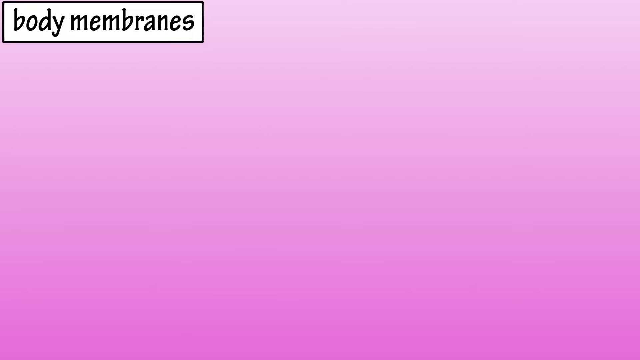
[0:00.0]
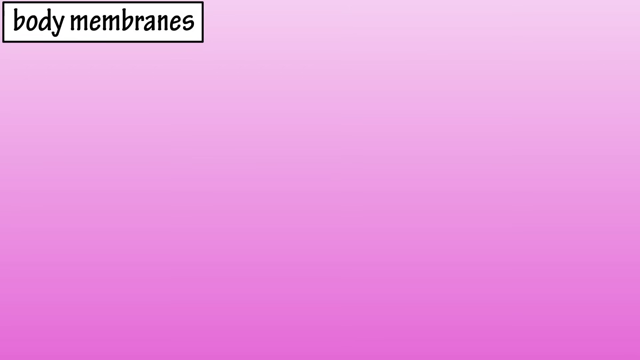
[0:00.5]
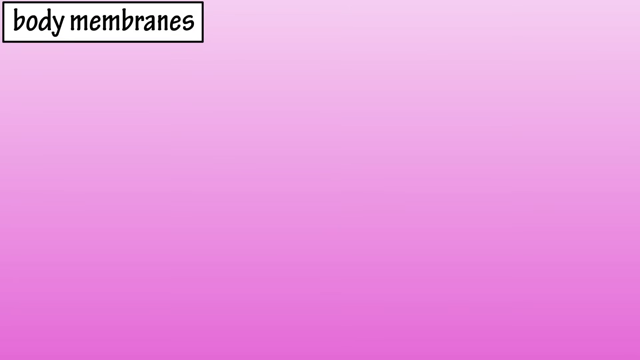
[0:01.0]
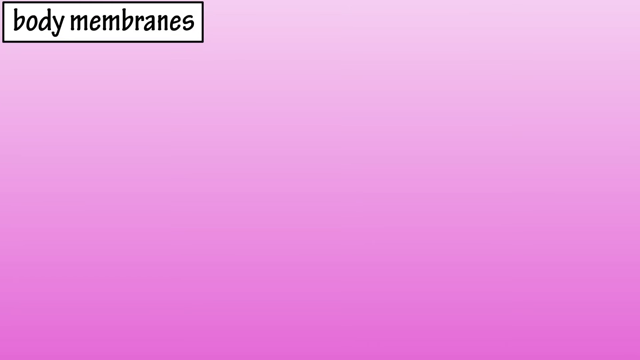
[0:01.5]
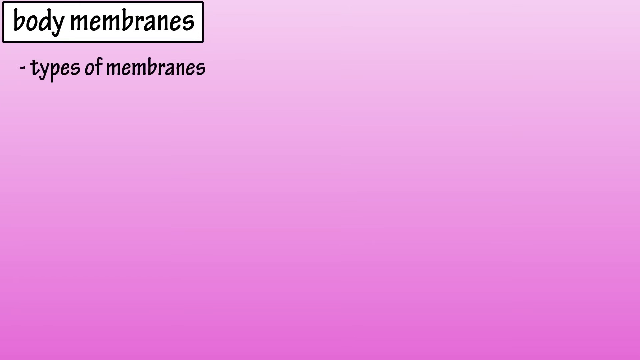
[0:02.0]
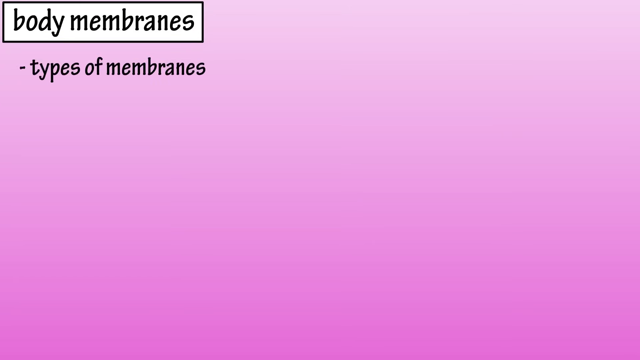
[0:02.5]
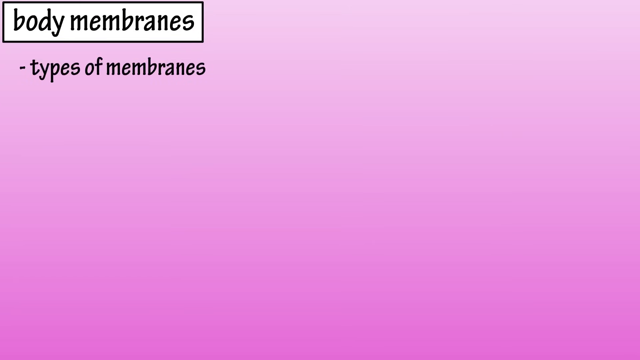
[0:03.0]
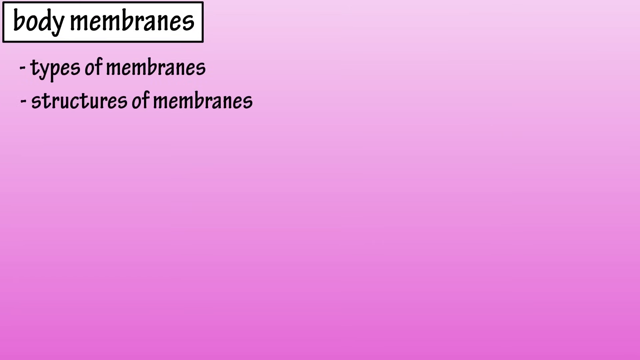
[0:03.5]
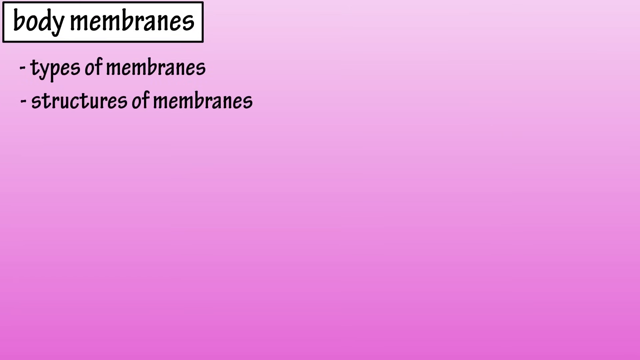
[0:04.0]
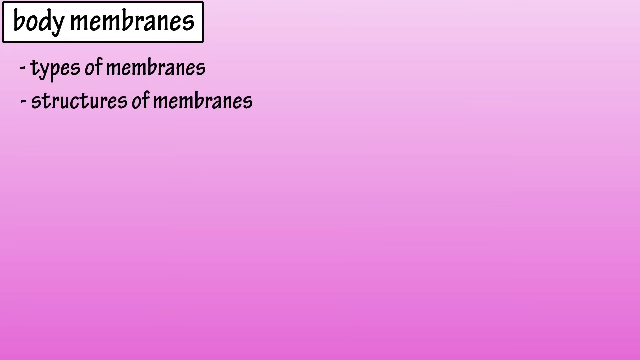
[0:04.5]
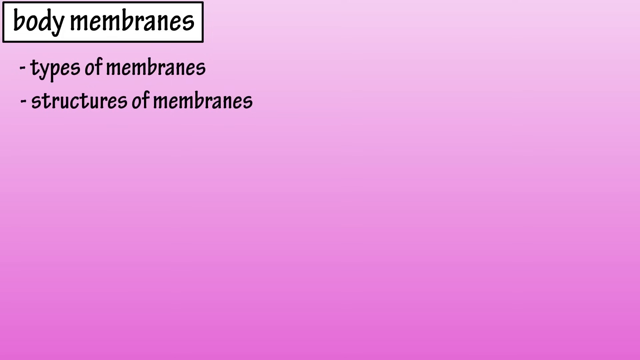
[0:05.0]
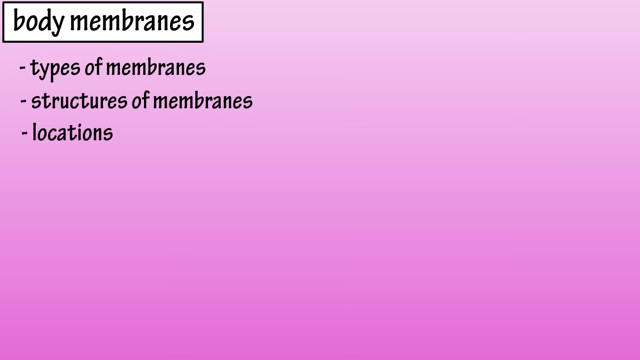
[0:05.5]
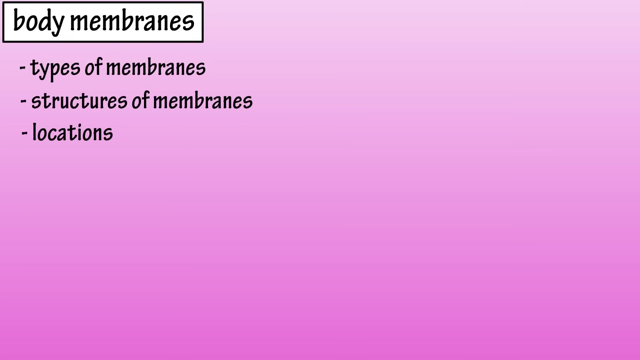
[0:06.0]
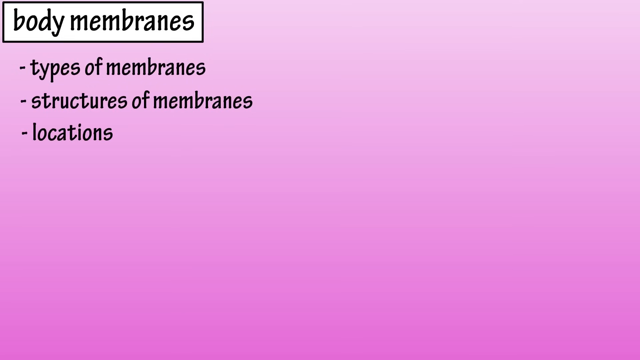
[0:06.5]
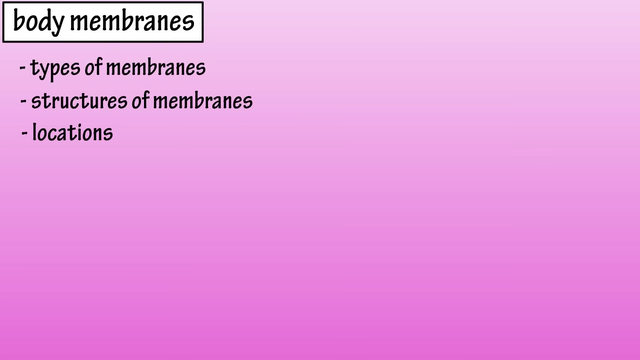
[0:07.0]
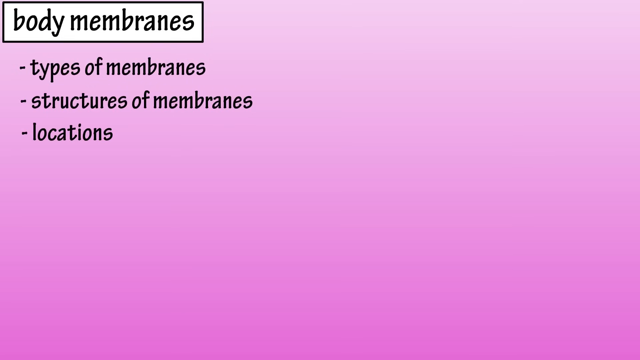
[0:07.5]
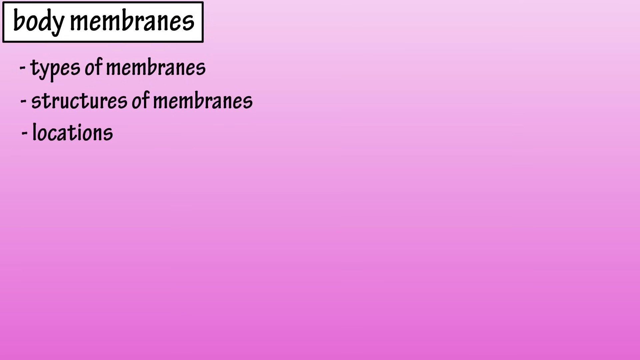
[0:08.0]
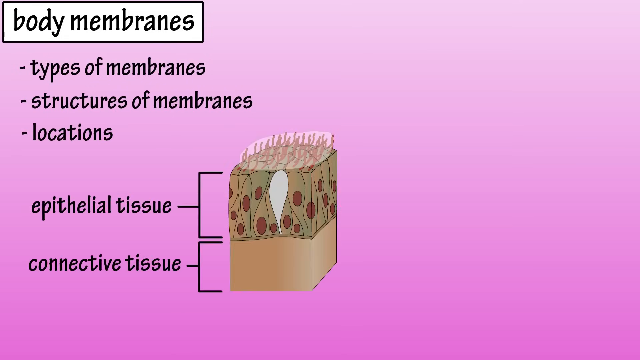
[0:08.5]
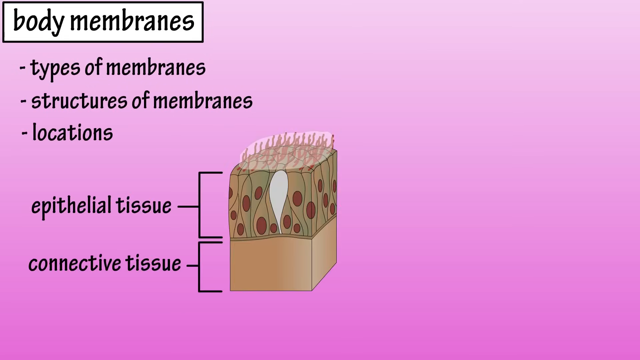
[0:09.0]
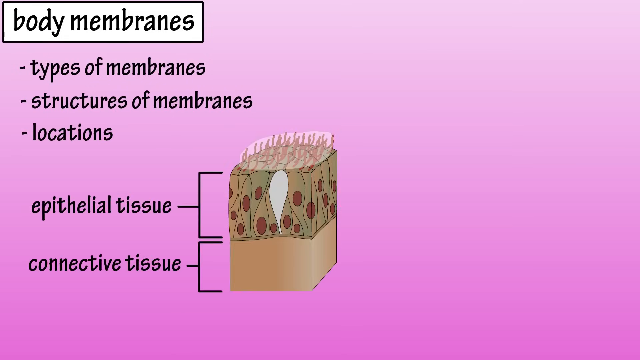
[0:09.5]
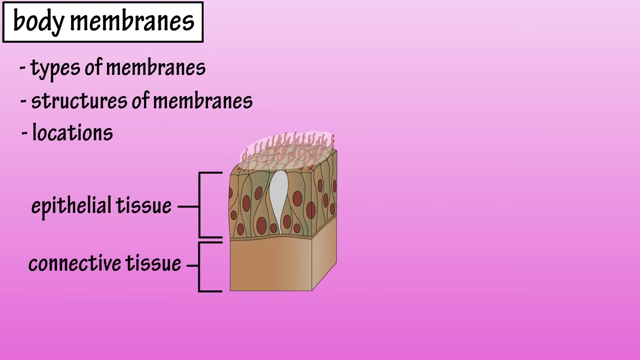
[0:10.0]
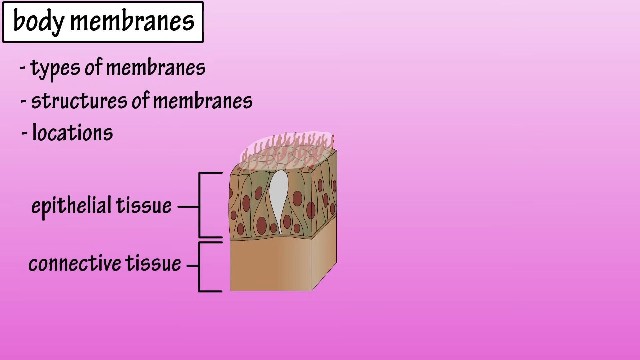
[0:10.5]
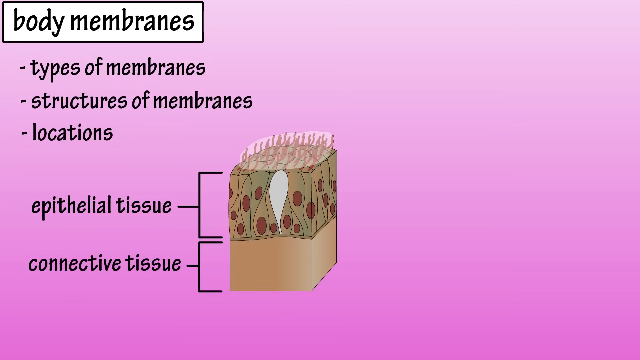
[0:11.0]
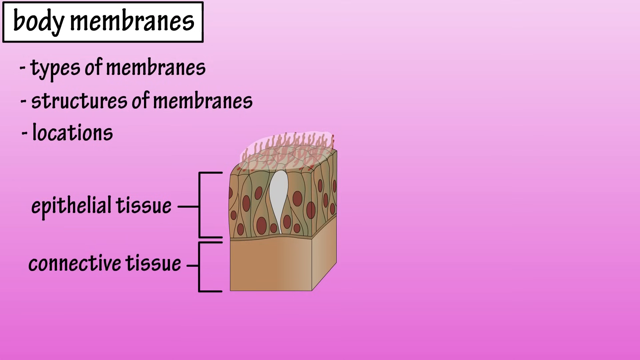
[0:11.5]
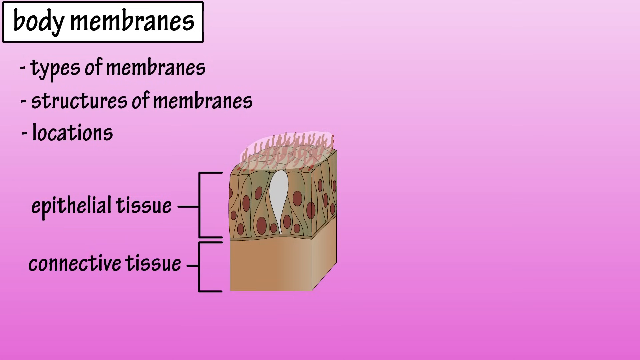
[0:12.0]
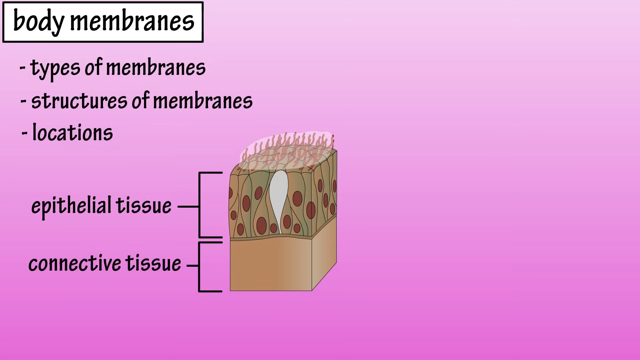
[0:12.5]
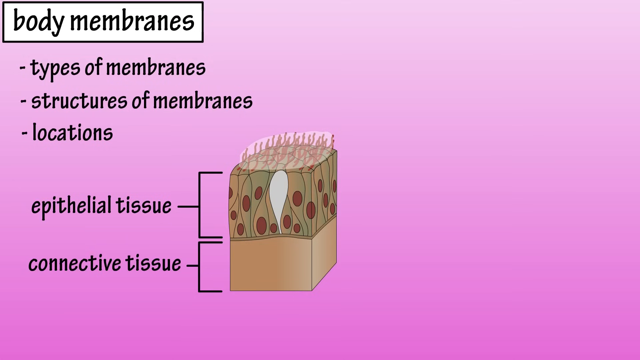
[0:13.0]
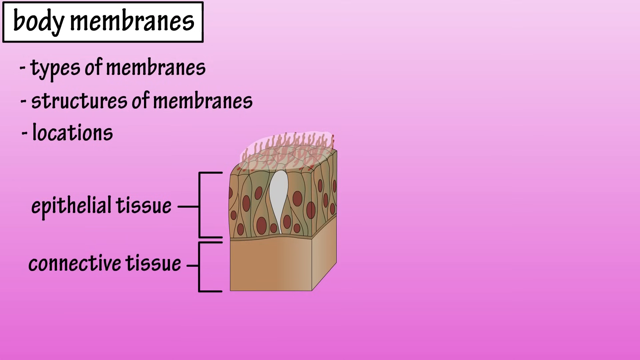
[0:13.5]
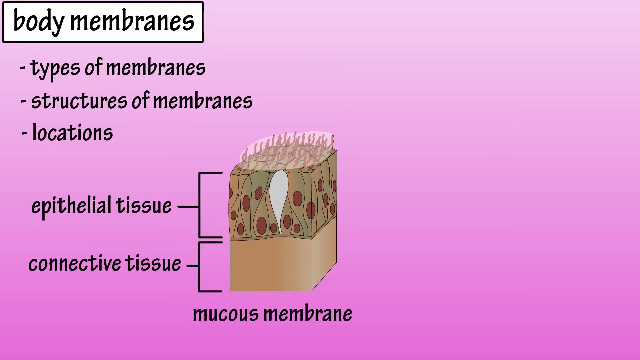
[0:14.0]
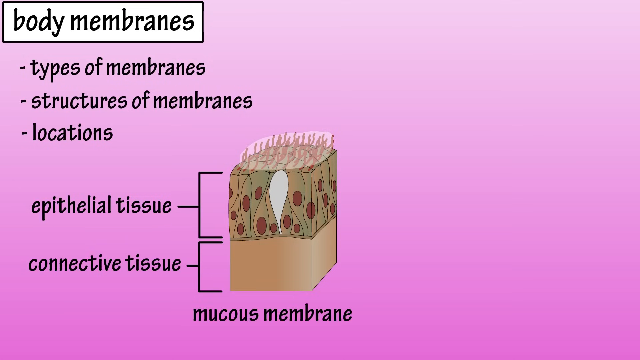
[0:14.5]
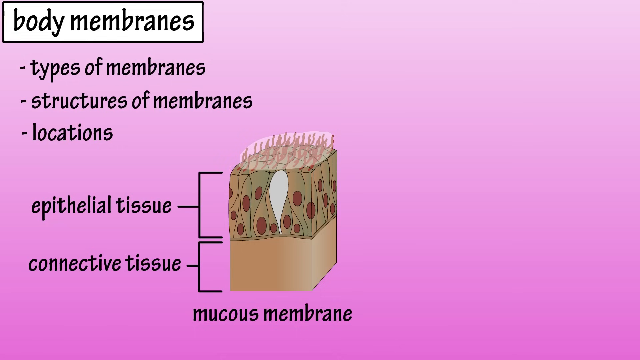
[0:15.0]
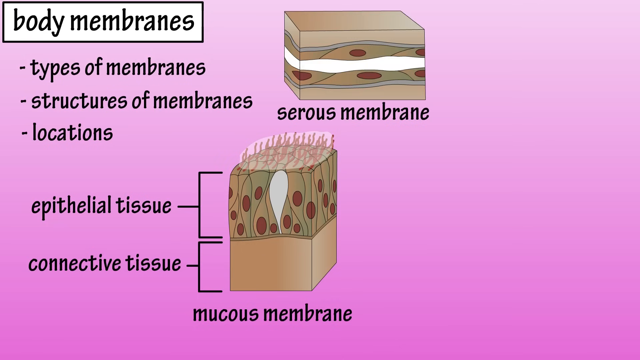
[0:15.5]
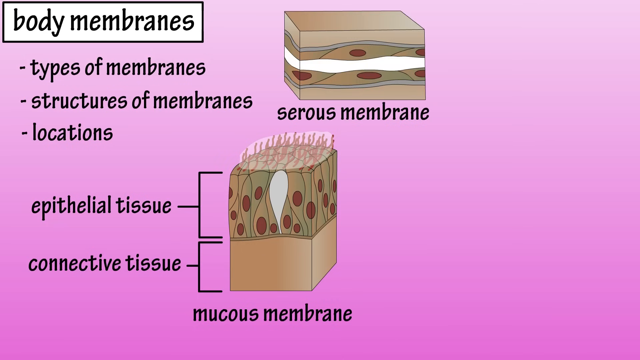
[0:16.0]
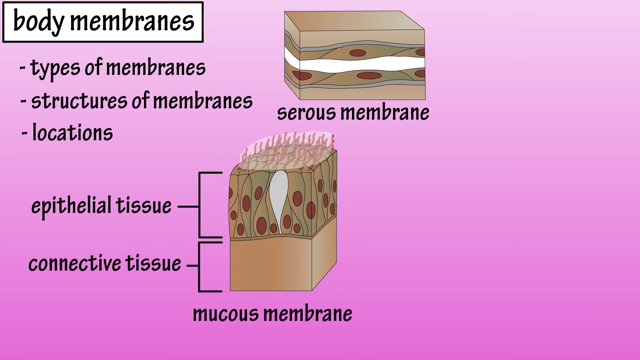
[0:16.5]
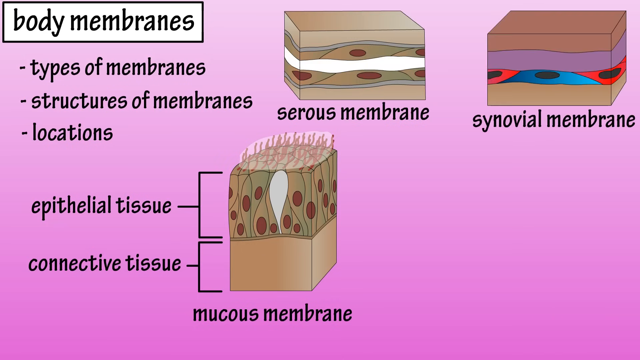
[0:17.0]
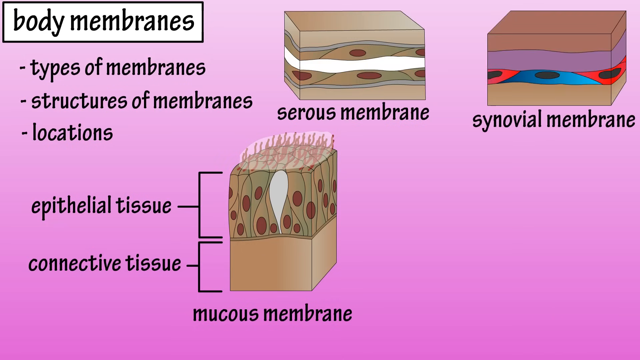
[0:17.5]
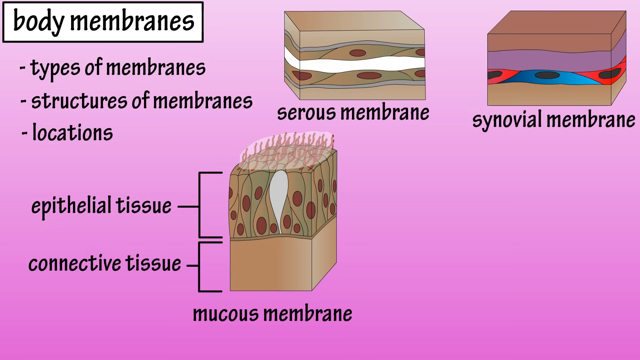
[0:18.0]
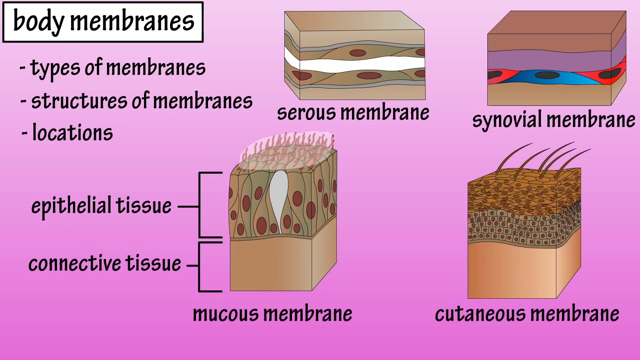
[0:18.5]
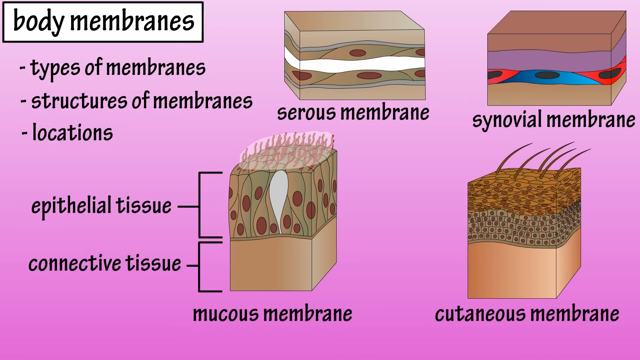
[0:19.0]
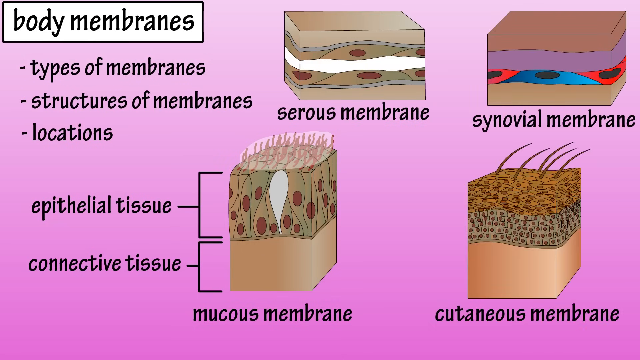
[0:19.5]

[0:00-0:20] The video opens on a pink gradient background that goes from white at the top to a darker pink near the bottom of the screen. In the top left corner is a white rectangular text box with a black border containing the black text "body membranes". Text then appears on the left-hand side of the screen in a black, Comic Sans-like font, popping onto the screen one line at a time from top to bottom: "types of membranes", "structures of membranes", "locations". Next, an image appears in the bottom left corner: a cube-shaped cross-section of epithelial and connective tissue, with labels on its left side and brackets linking each label to the part of the image it refers to. The text "mucous membrane" appears underneath this image. Another cube-shaped cross-section, of the serous membrane, appears at the top center of the screen, the synovial membrane appears in the top right corner, and a final cross-section image, the cutaneous membrane, appears in the bottom right corner.